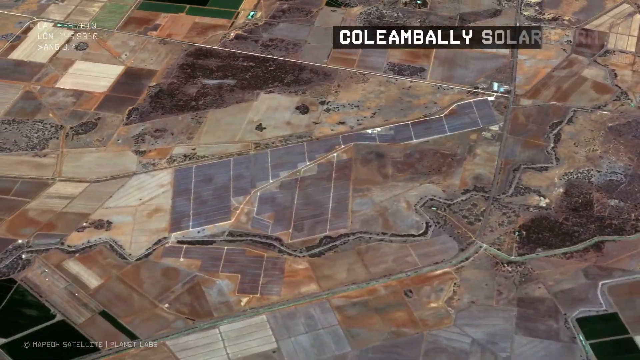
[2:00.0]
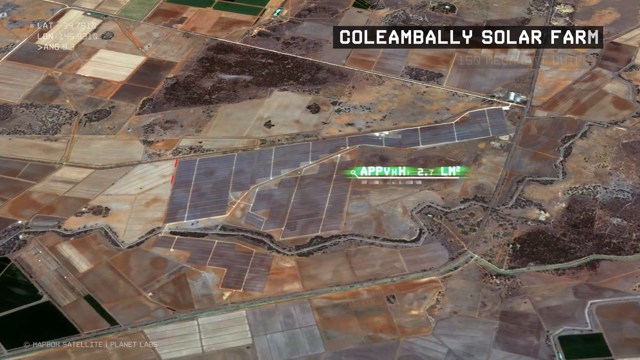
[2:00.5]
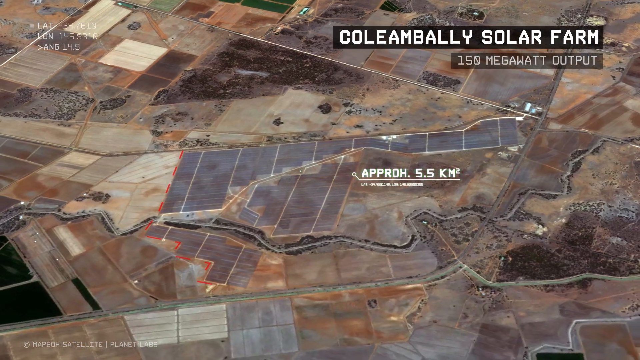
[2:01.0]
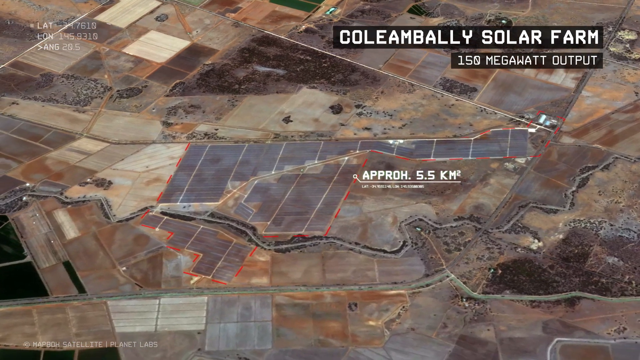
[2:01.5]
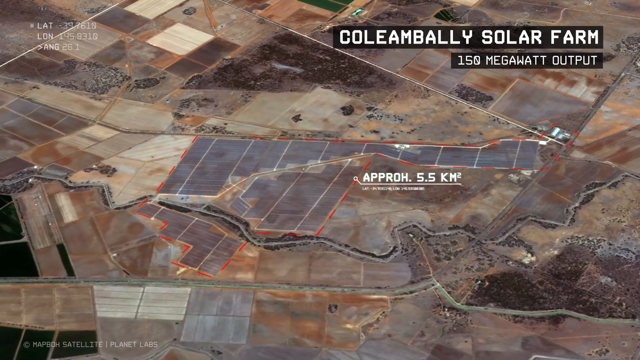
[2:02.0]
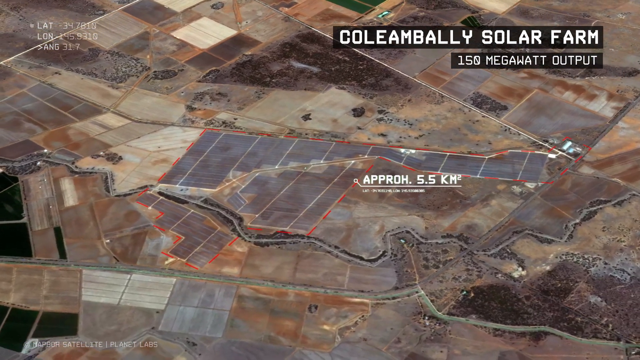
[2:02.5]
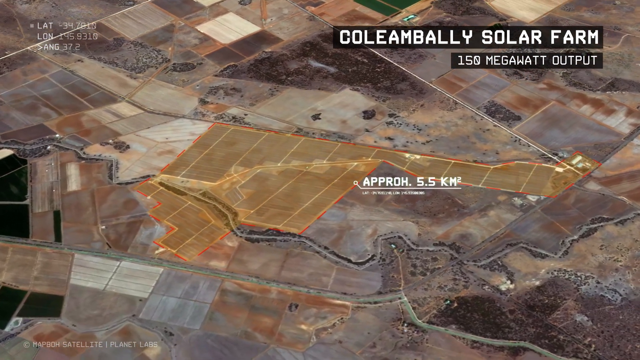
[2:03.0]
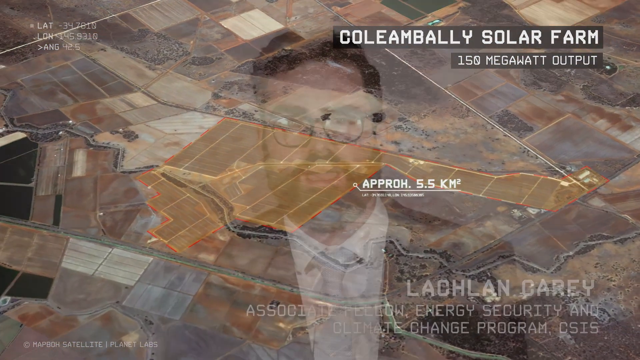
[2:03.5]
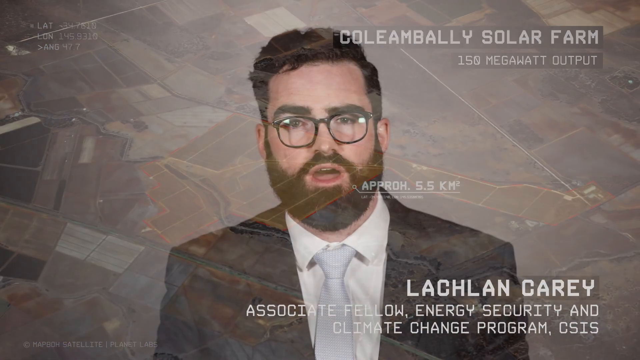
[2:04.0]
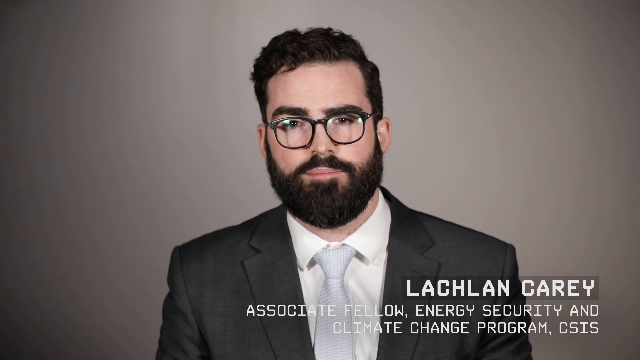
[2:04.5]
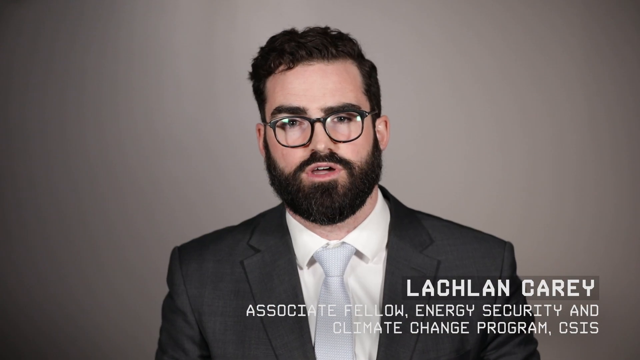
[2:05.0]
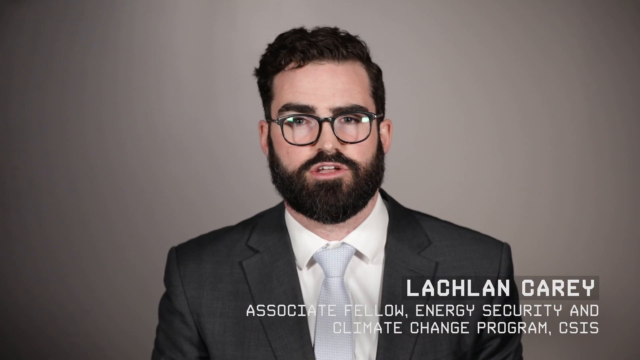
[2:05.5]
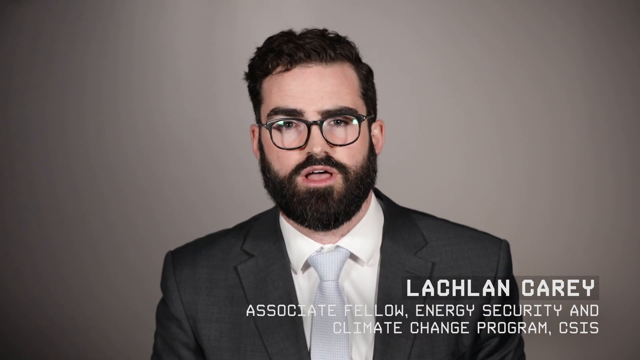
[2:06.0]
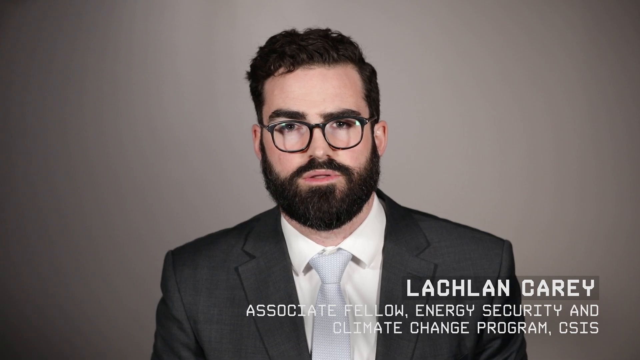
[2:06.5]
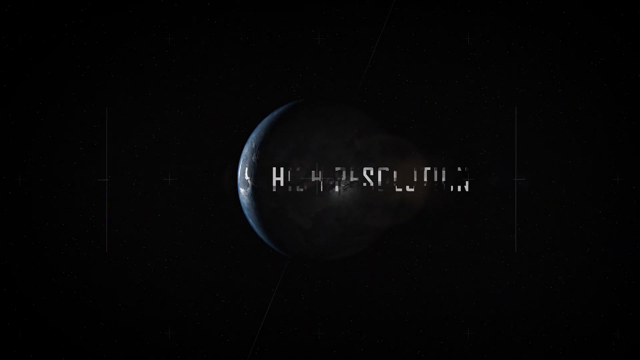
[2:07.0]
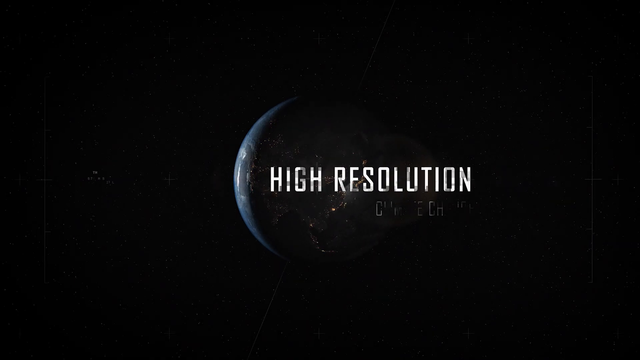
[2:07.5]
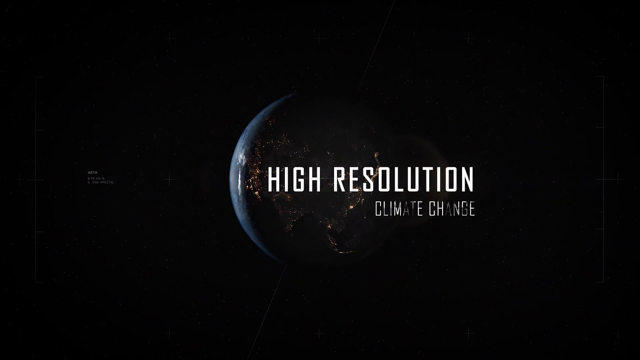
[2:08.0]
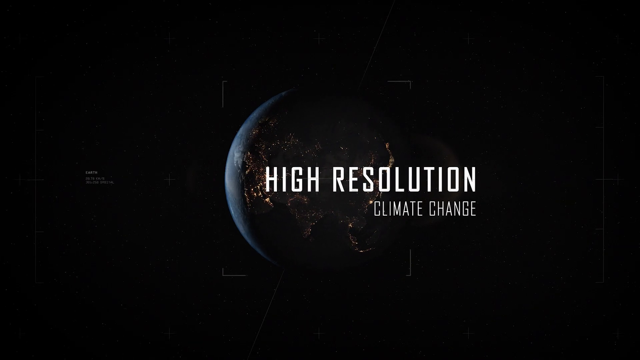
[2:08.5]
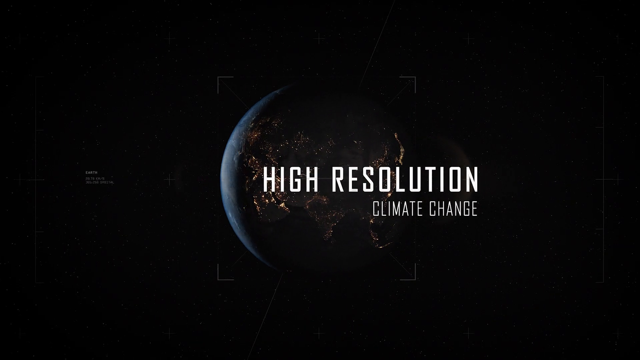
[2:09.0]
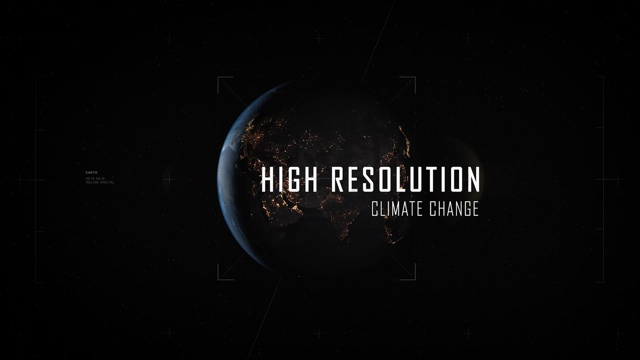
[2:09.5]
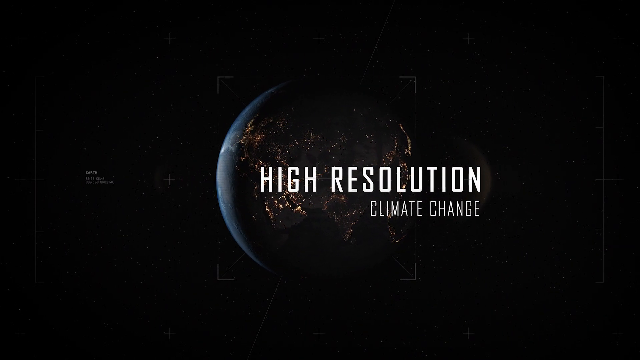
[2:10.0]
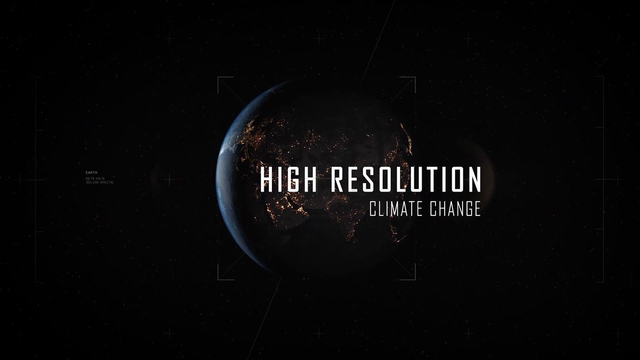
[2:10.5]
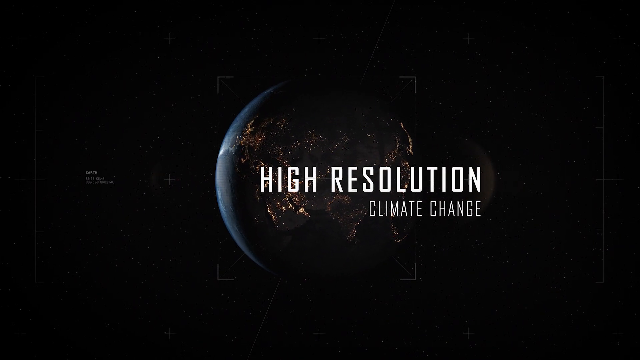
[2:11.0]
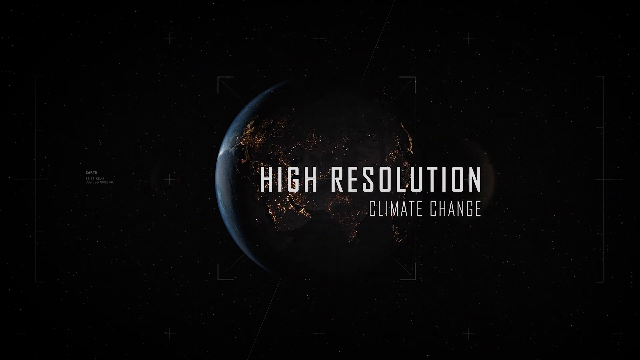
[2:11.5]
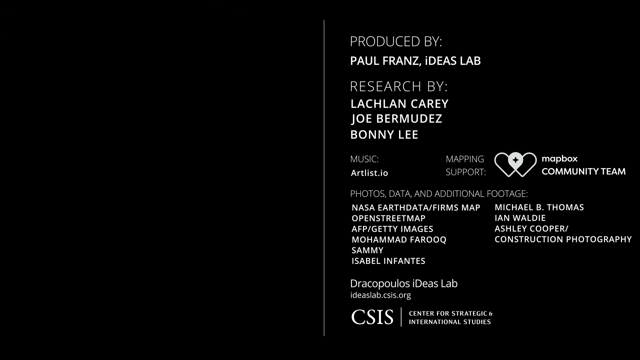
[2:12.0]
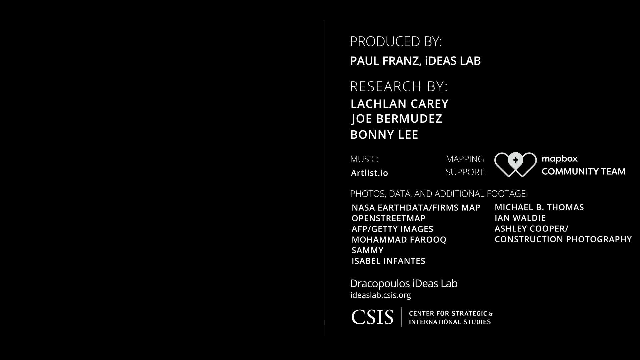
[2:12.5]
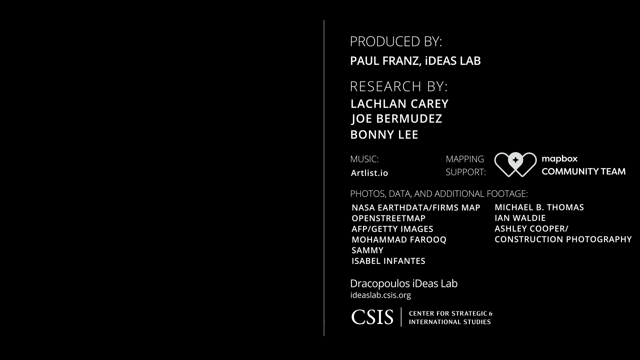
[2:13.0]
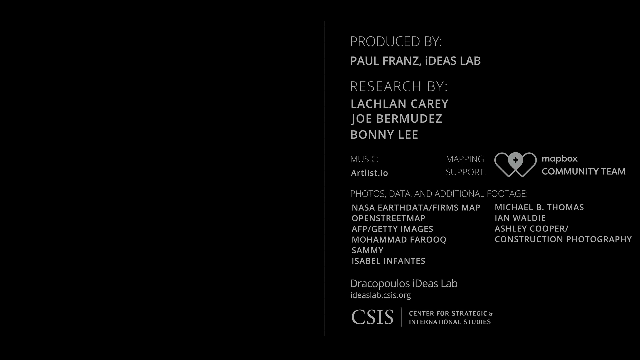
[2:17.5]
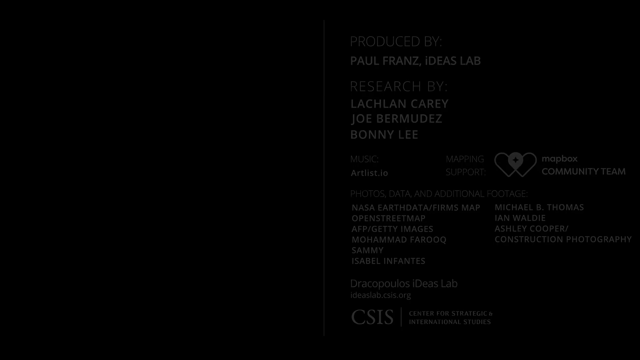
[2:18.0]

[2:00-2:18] Lachlan Carey appears again. A location in a country is shown with the text "Kolamblei solar farm", "150 megawatt output" and "5.5 kilometers", possibly with pictures of the solar farm, which looks like a large number of solar systems. An ending image with a picture of the Earth appears, with the text "high resolution climate change", as if it were the media group. A few photo frames follow, possibly crediting the people who helped with the research, music, mapping, photos and data.